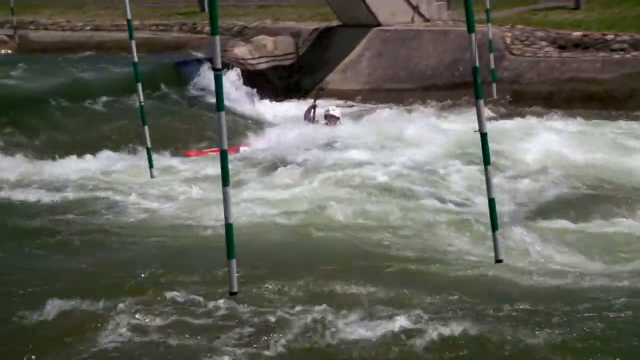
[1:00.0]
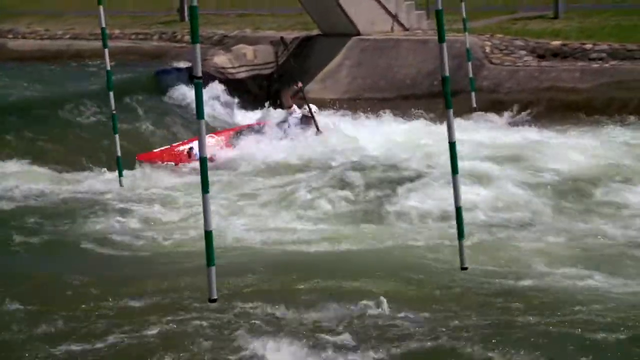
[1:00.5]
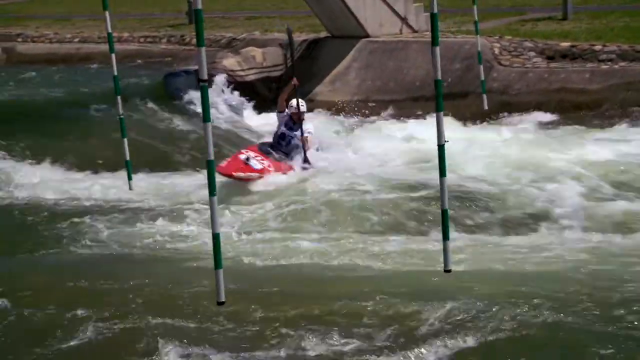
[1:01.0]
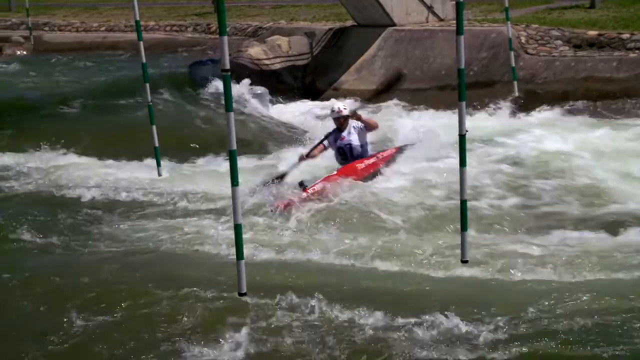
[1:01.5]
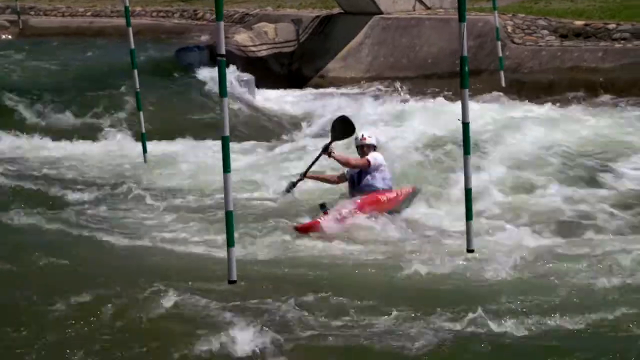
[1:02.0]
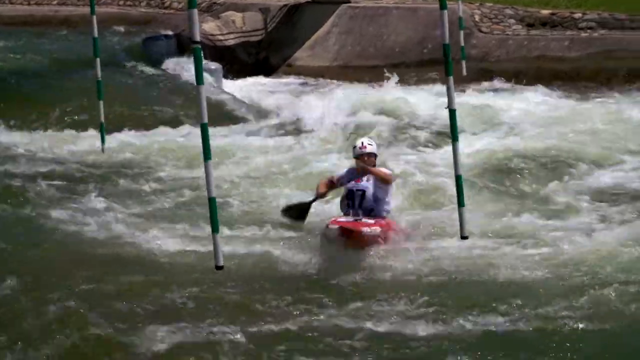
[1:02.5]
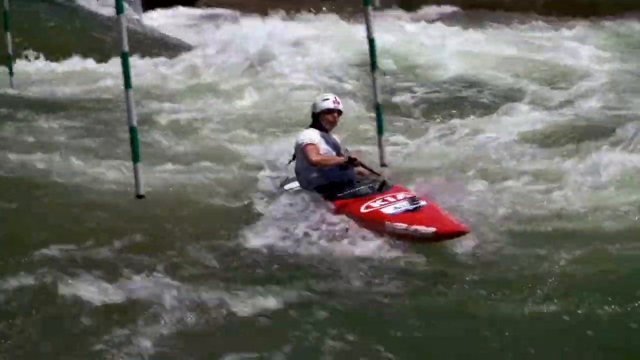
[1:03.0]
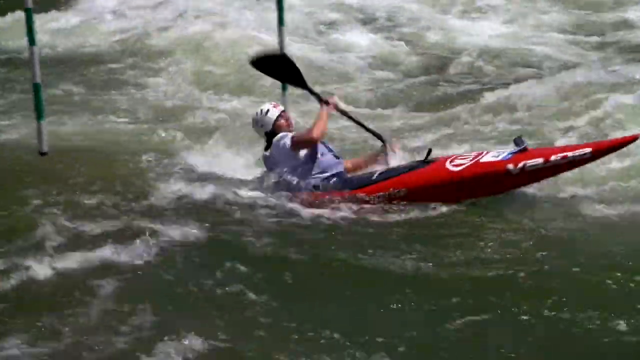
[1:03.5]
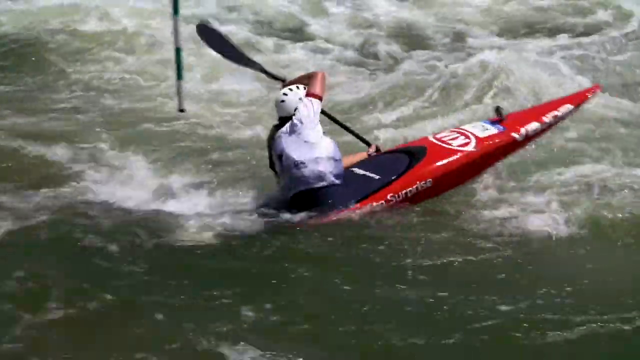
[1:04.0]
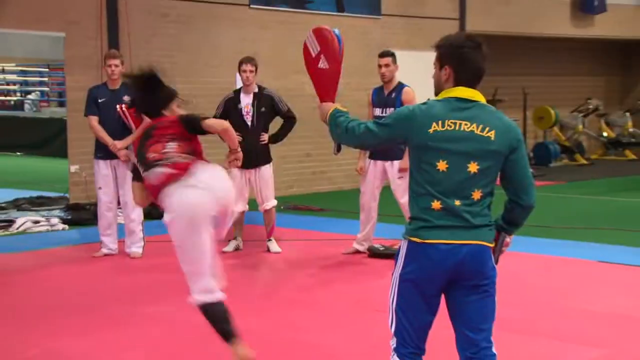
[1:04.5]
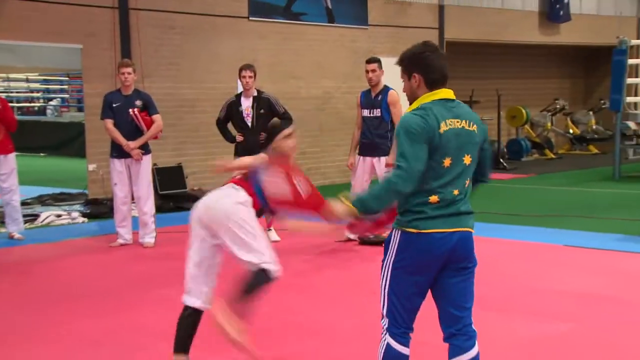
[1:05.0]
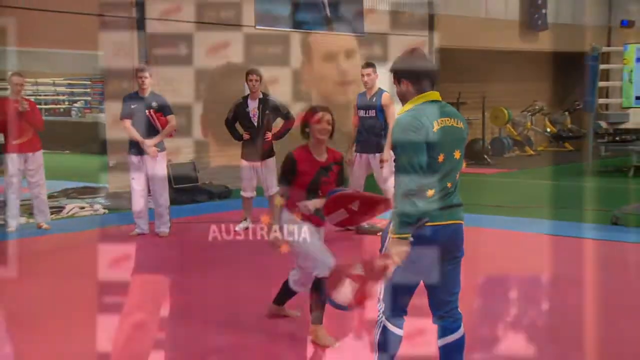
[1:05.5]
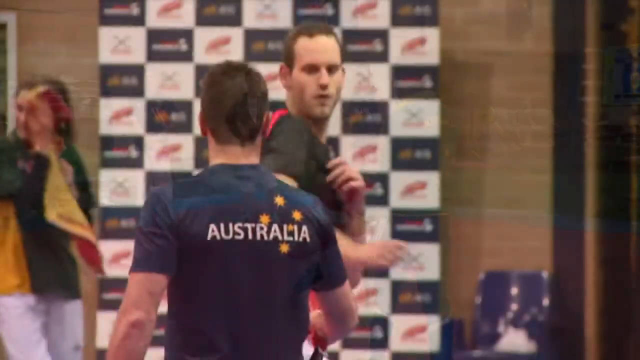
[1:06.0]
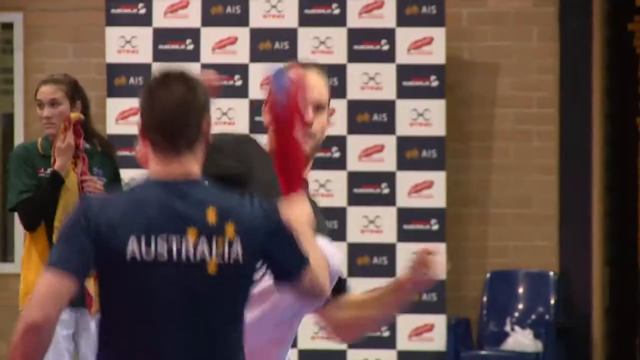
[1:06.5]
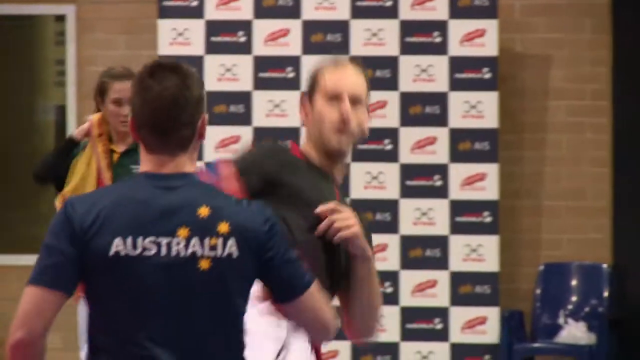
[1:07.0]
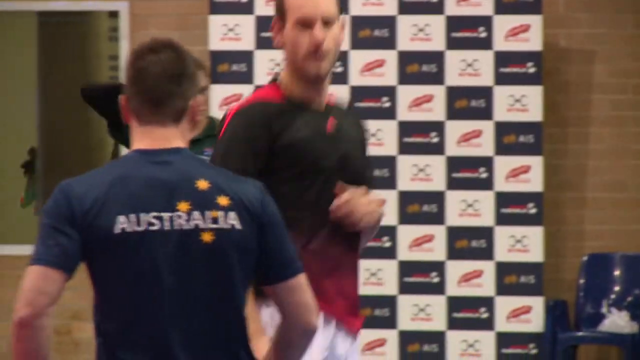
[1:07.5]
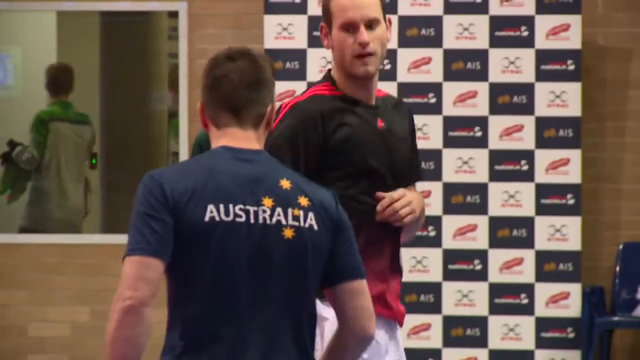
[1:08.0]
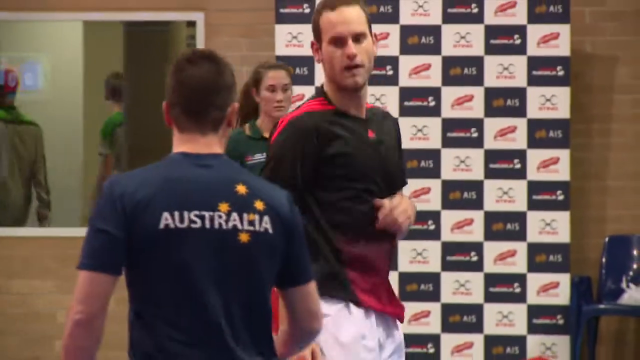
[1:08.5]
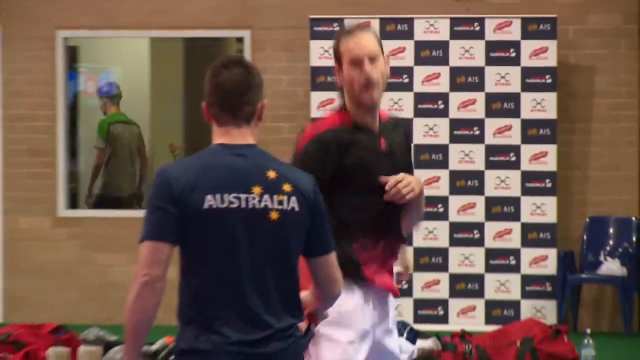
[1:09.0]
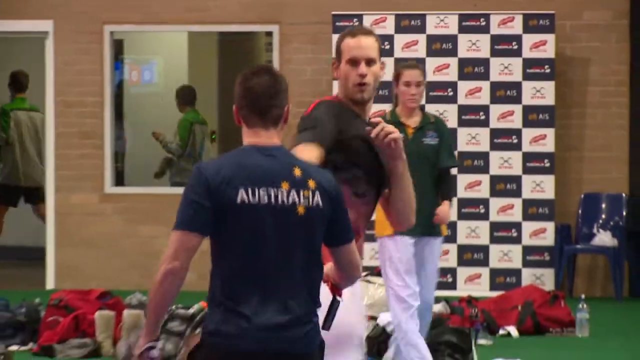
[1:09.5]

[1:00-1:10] The man in a red kayak, wearing a white helmet, paddles furiously in what looks to be a canal with an extremely rough current, some form of rapids. It is a competition of some sort, and there are poles in the water that presumably indicate the course. The current spins him around, then he kind of regains his composure and continues paddling. The scene shifts to another sport that looks like karate or, probably, kickboxing. Two men are practicing; one kicks at the other, who has his gloves up, hitting the gloves with his foot.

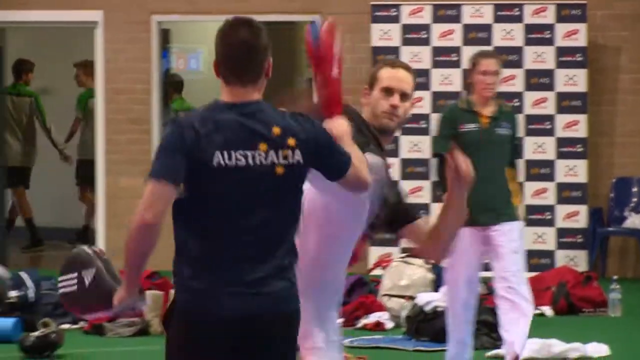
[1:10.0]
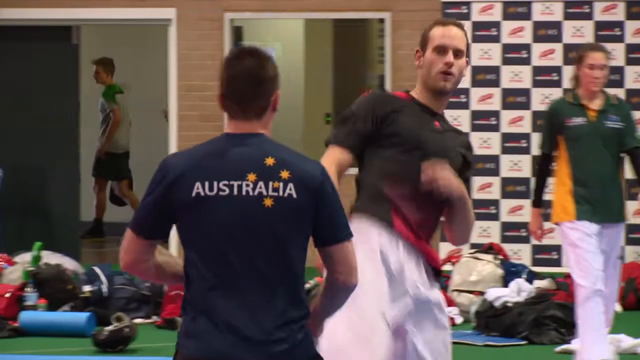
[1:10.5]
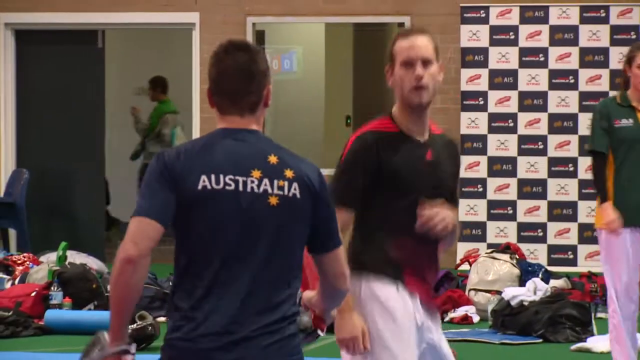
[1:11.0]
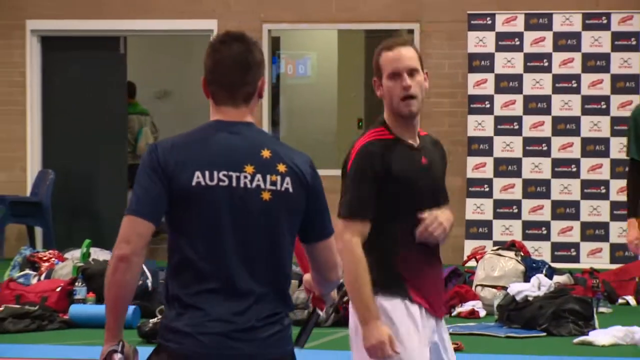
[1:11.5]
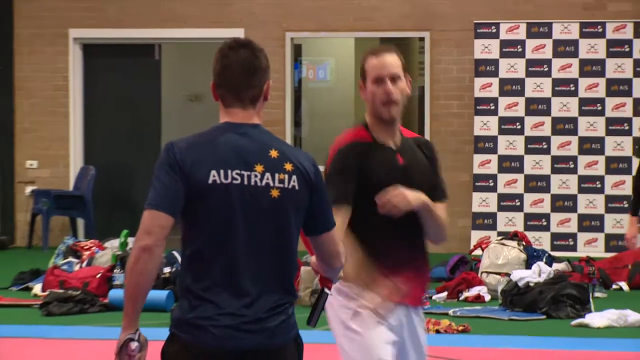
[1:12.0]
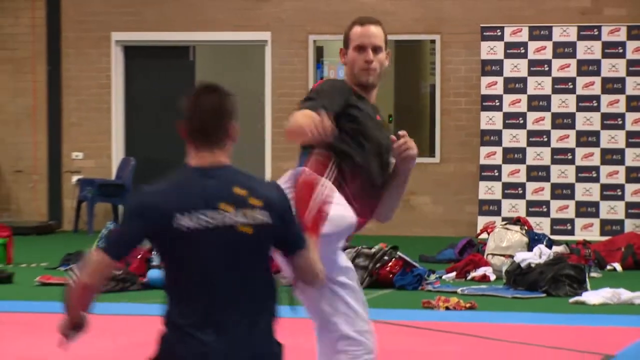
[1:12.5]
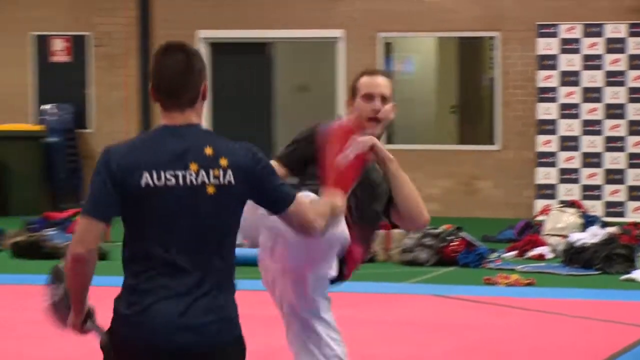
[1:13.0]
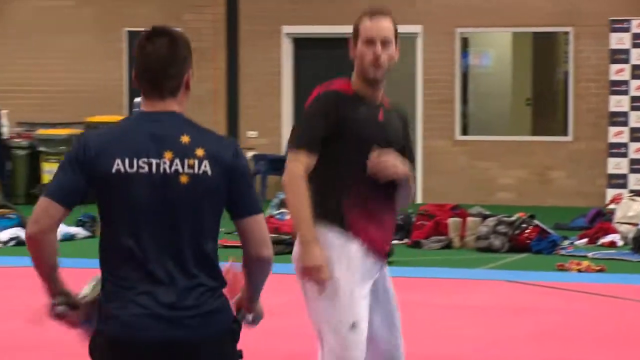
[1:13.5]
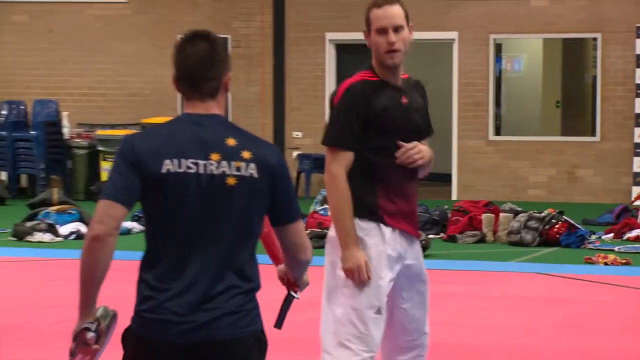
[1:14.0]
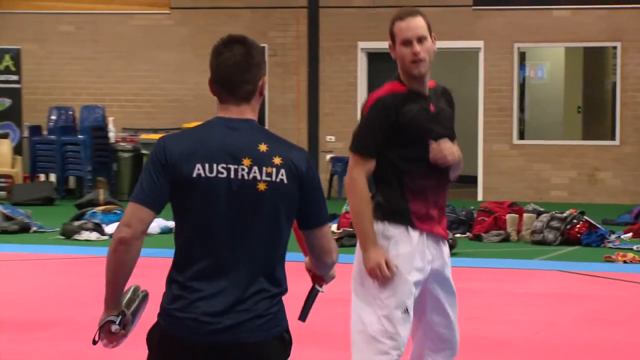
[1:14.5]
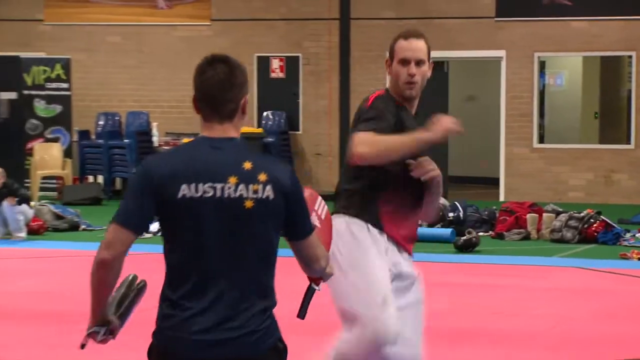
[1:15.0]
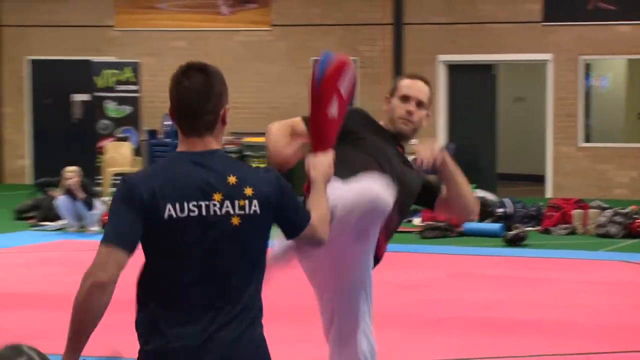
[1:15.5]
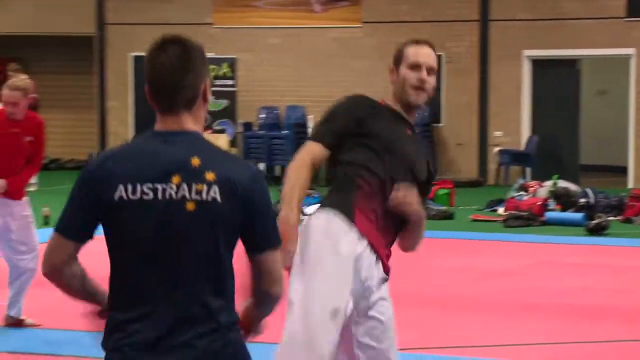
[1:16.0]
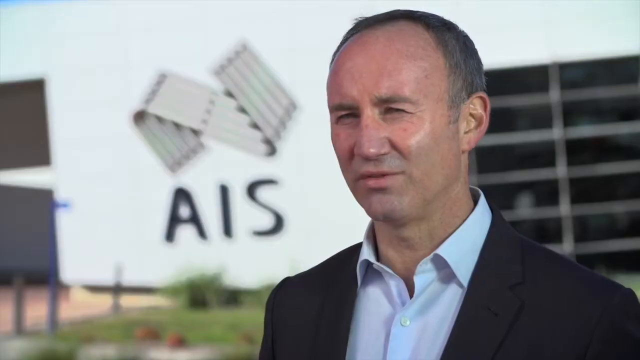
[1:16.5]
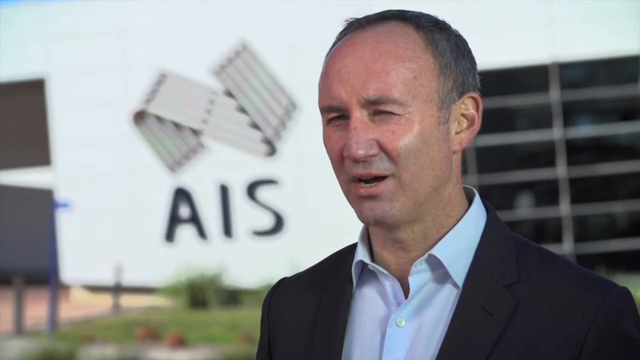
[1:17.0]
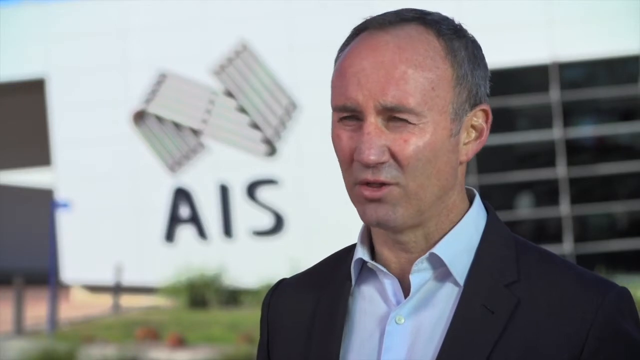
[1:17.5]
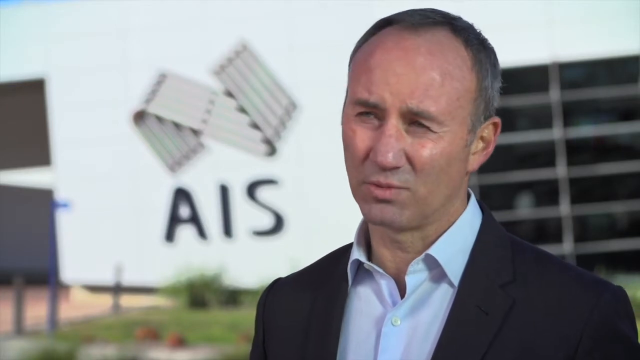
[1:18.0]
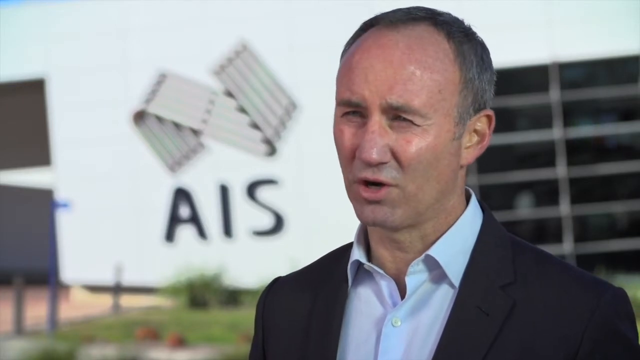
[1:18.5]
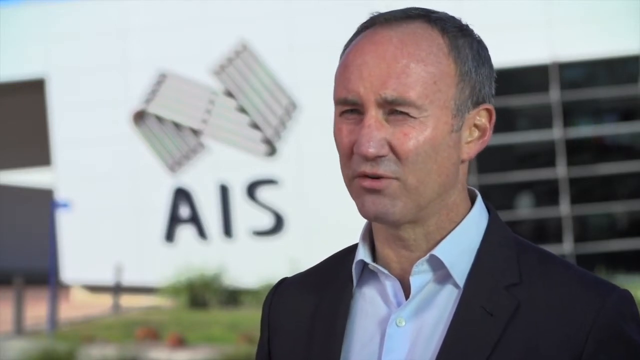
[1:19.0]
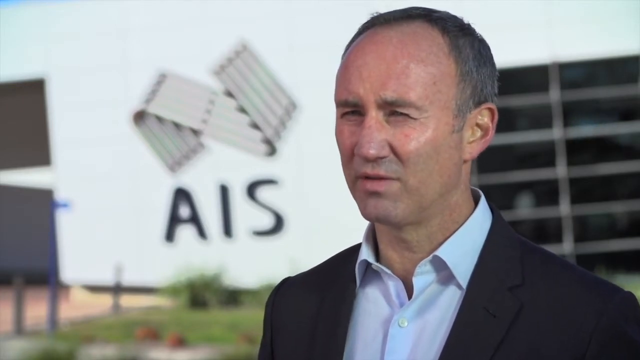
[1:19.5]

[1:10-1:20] In what is apparently a gymnasium, two men practice kickboxing on a big floor mat, with a bunch of people gathered around. In the foreground, seen from the back, is a man in a blue t-shirt that says "Australia," blocking kicks from the man in the background, who is apparently wearing white pants and a dark shirt. The video then suddenly shifts back to the director of AIS being interviewed.